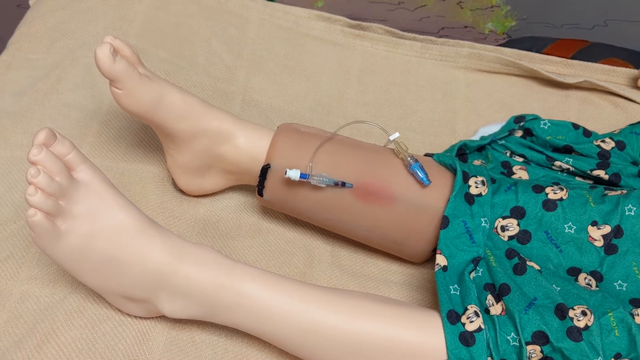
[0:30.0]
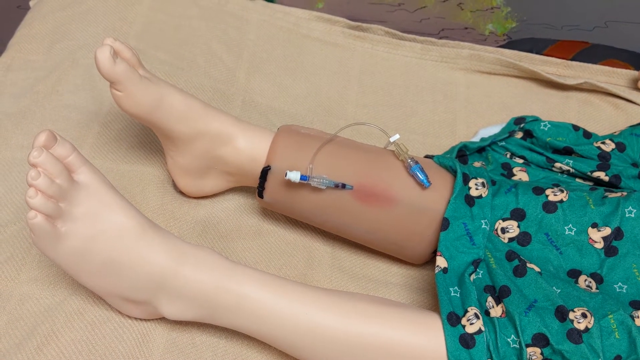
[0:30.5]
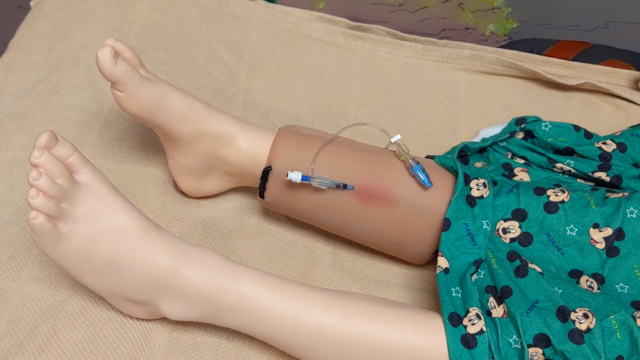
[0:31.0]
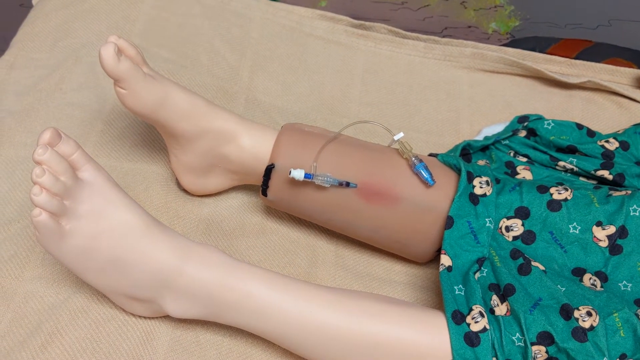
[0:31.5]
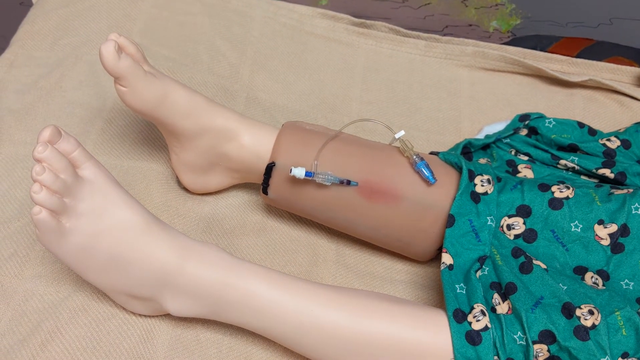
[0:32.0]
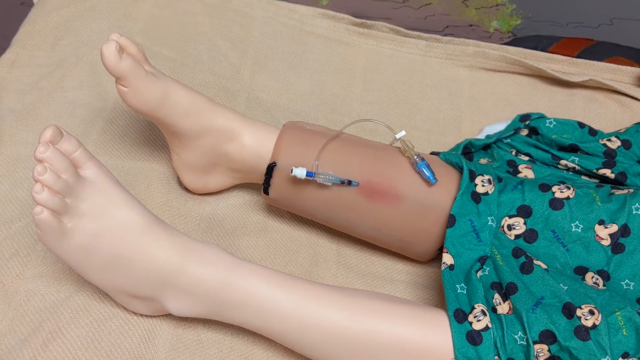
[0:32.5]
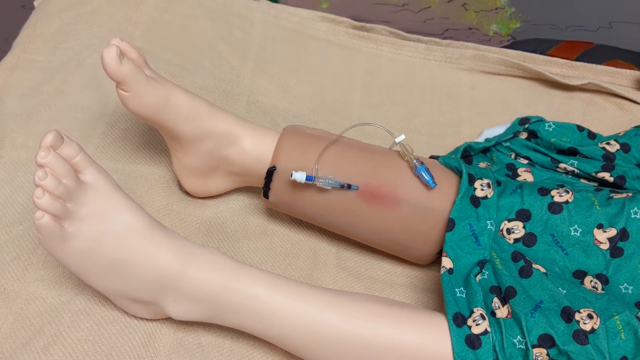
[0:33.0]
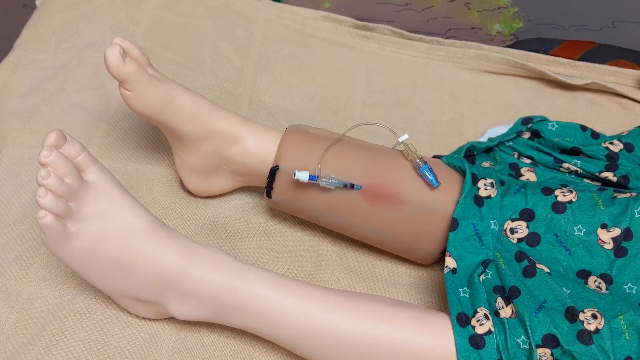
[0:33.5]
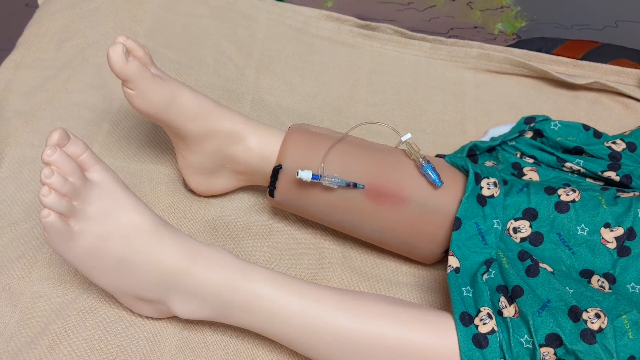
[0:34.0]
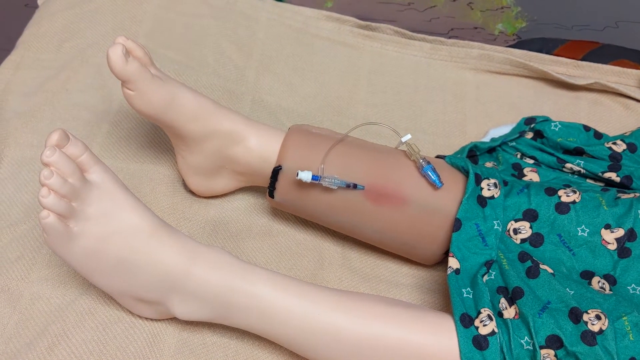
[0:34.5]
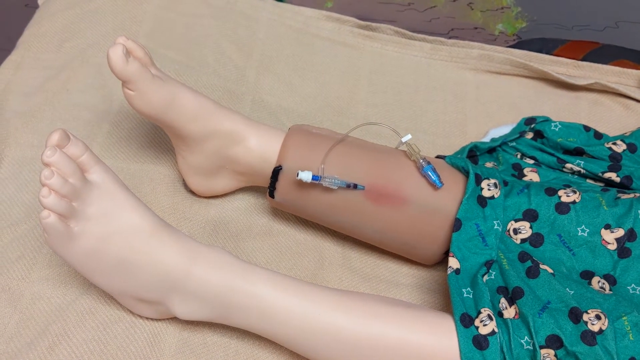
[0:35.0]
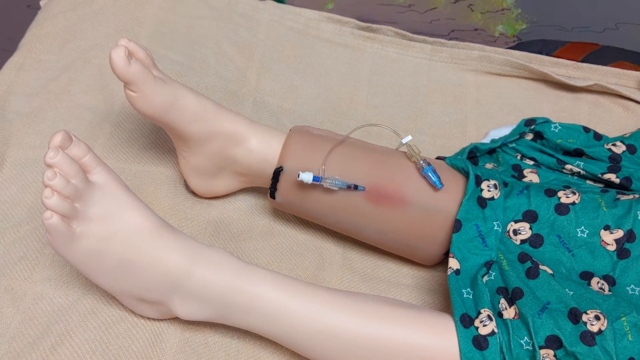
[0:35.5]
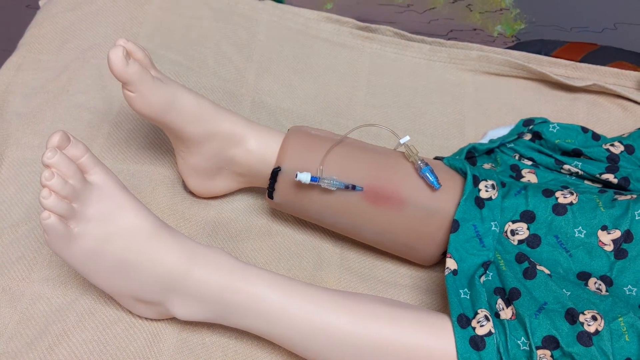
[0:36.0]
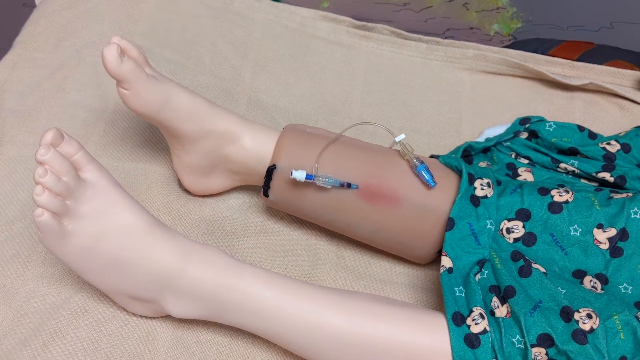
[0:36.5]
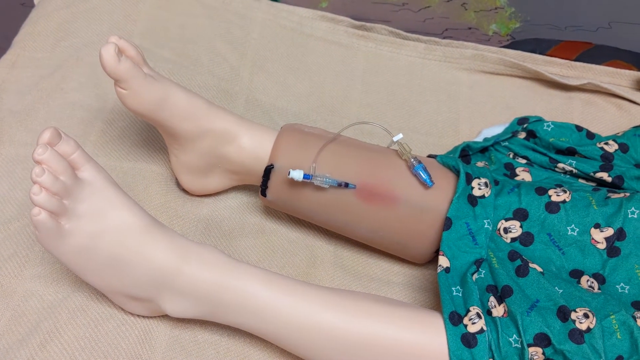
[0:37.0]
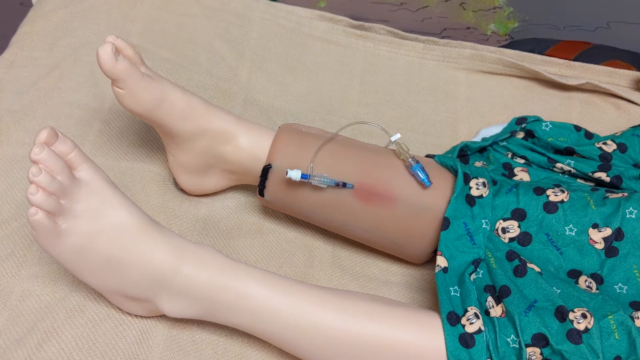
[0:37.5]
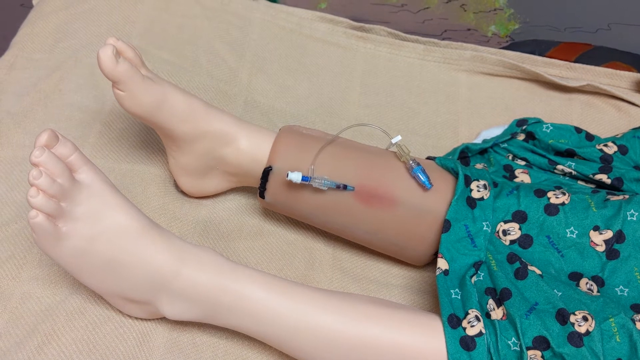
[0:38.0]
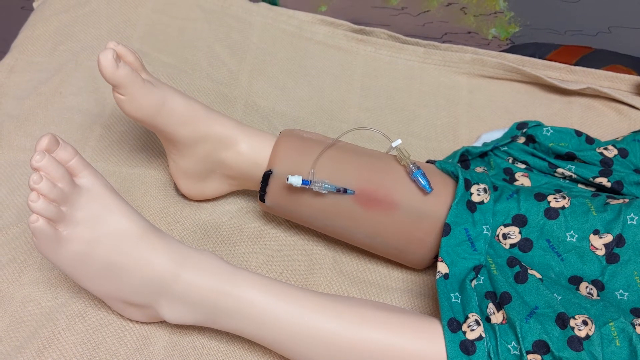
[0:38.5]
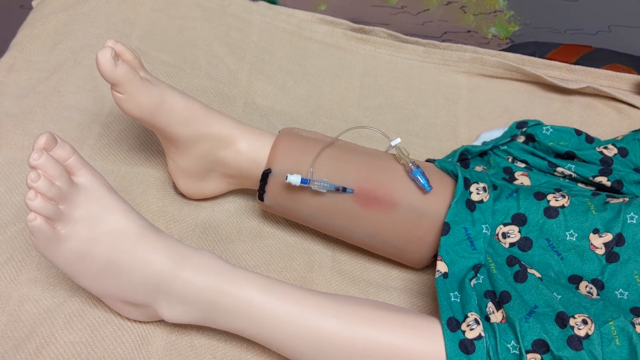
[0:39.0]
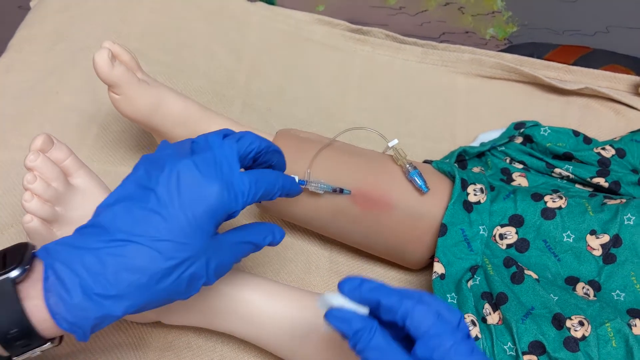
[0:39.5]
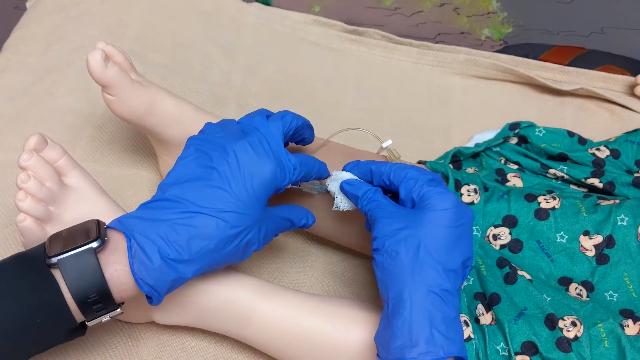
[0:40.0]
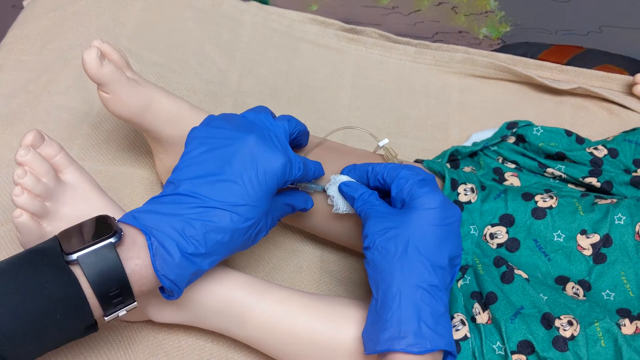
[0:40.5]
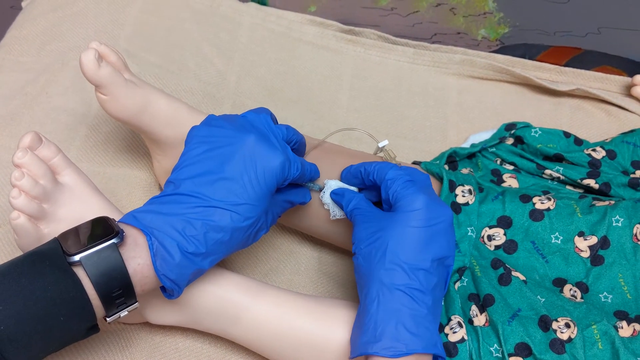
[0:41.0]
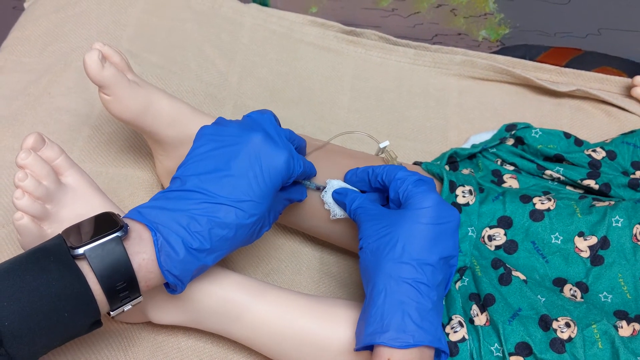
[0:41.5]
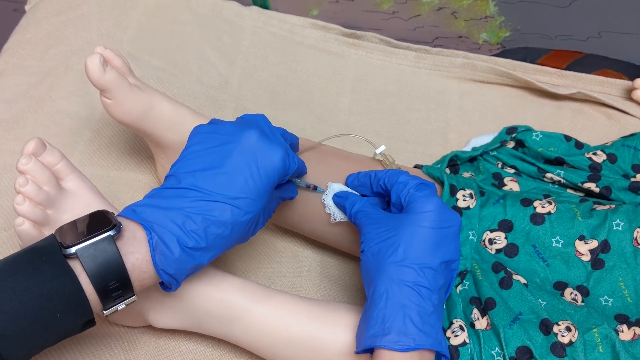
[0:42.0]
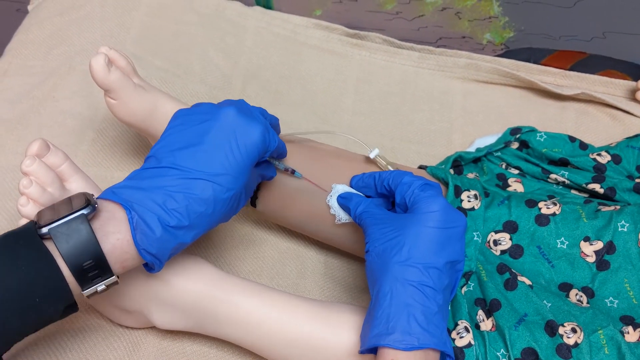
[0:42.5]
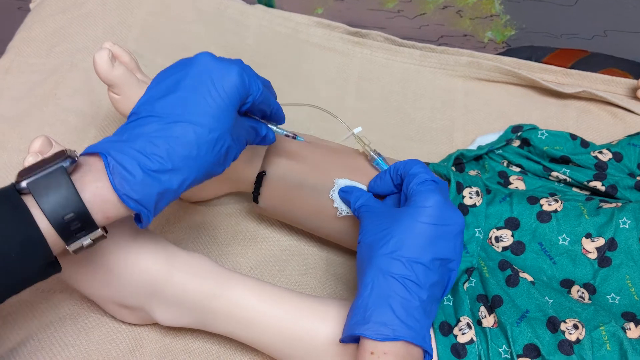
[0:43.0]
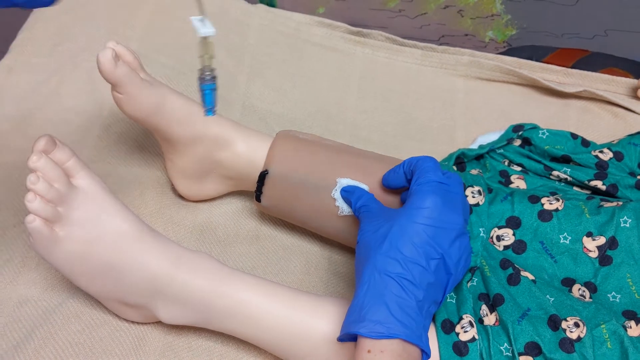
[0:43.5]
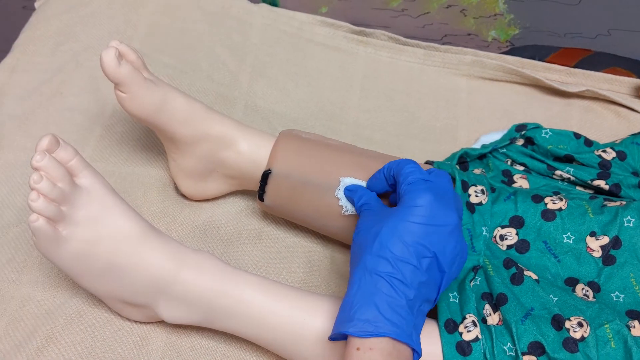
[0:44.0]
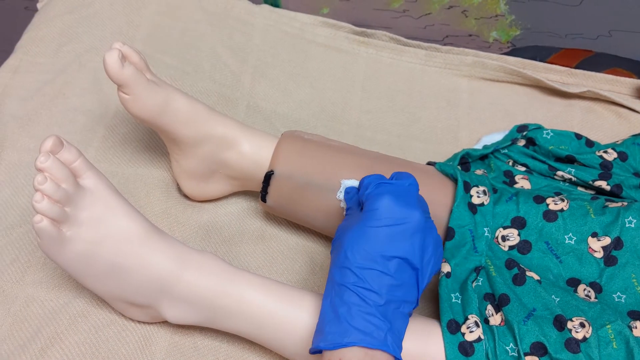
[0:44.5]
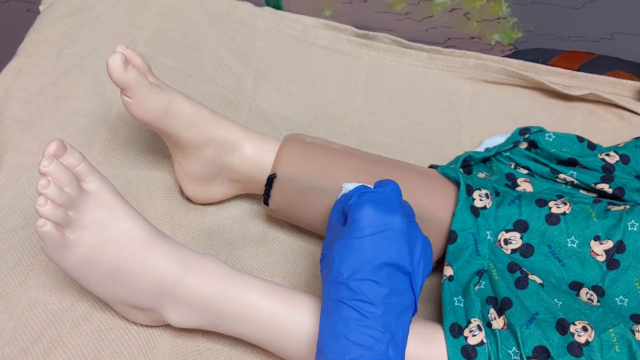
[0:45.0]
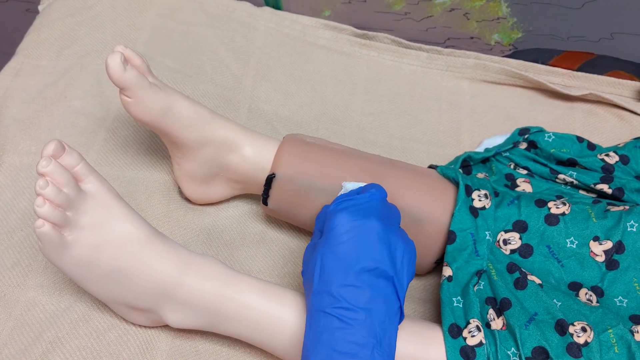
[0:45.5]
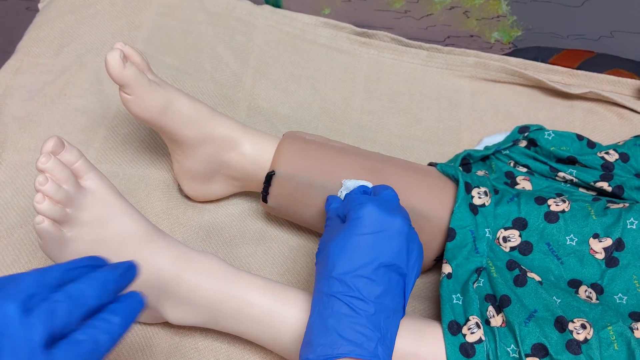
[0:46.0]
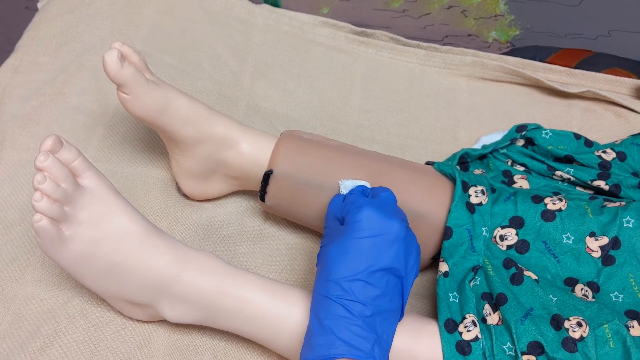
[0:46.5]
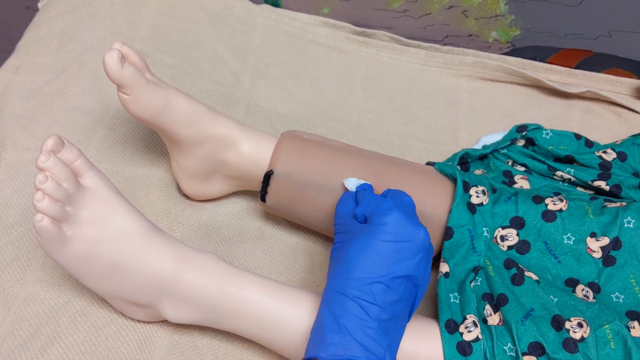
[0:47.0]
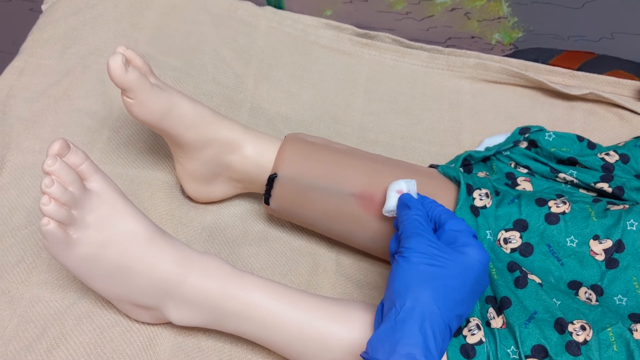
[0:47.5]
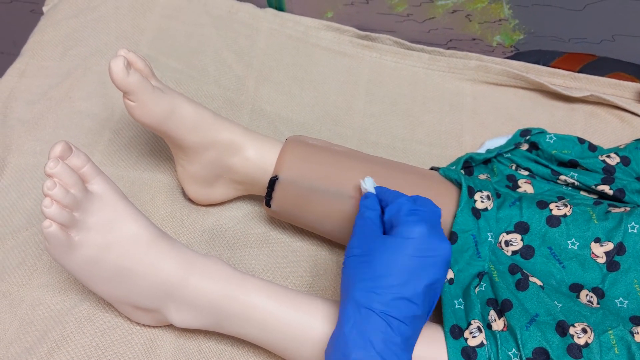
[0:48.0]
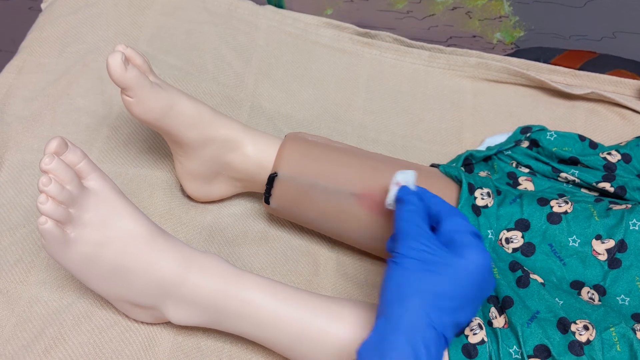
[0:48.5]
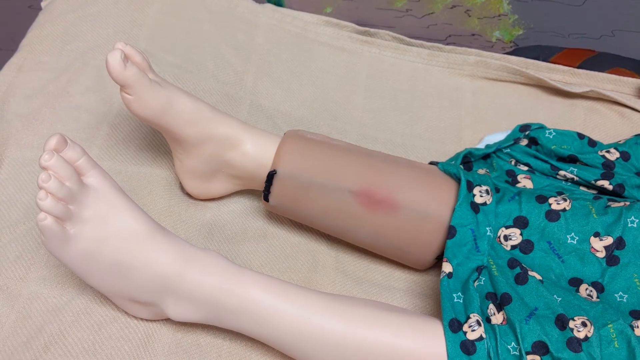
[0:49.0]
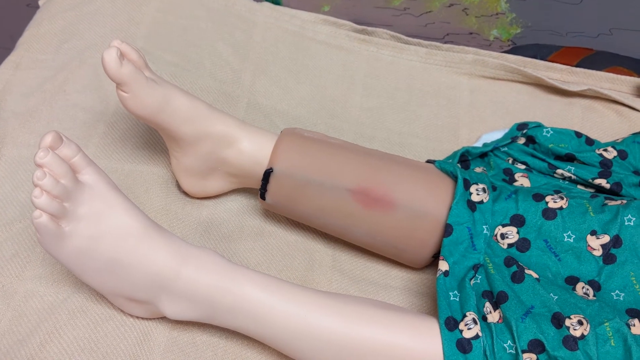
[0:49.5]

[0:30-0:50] The IV is placed on the side of the device, and redness is visible underneath where the needle was inserted. The IV is attached to a small plastic tube with an attachment on the other end for pushing medication through. The mannequin's feet are small, and it seems to represent a child. Two hands wearing blue exam gloves appear on screen, and an Apple Watch with a black band is on the person's left hand. The person takes a piece of gauze and presses it on top of the IV site, pressing down with the right thumb while supporting it with the pointer finger. The left hand squeezes the side with the pointer finger and thumb to remove the needle. The needle is removed and the gauze is pressed on top of the site. A small amount of red liquid, representing blood, comes out of the device around the mannequin's leg.